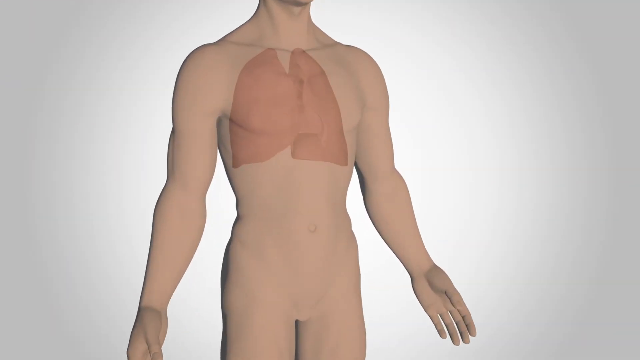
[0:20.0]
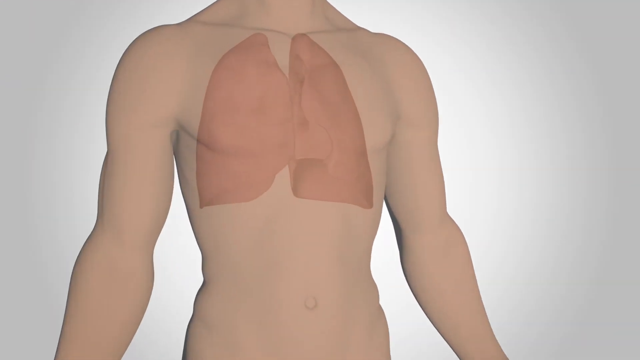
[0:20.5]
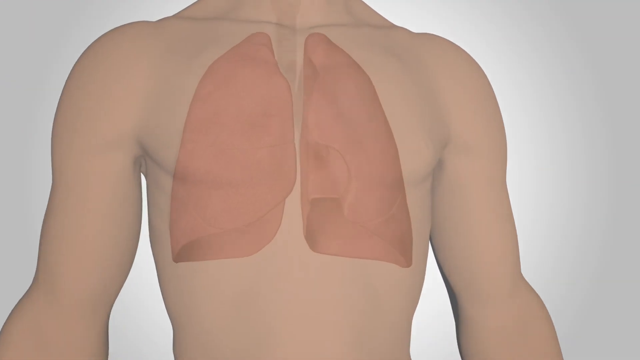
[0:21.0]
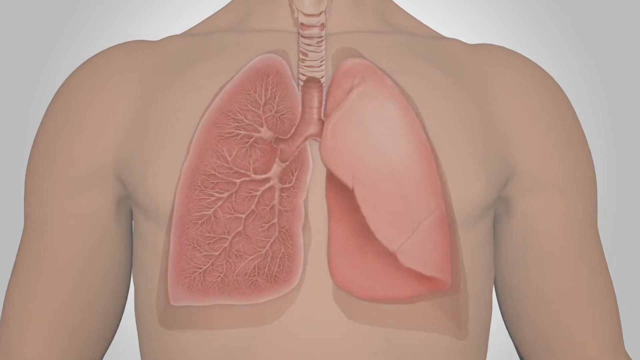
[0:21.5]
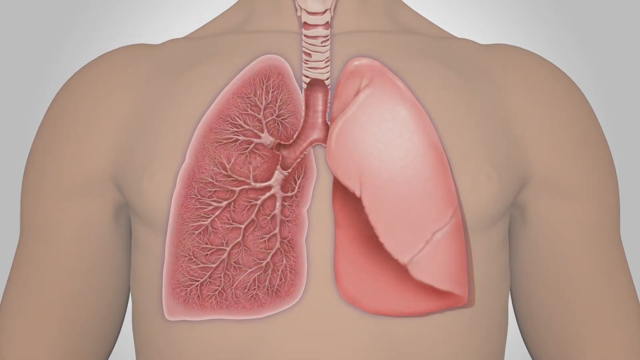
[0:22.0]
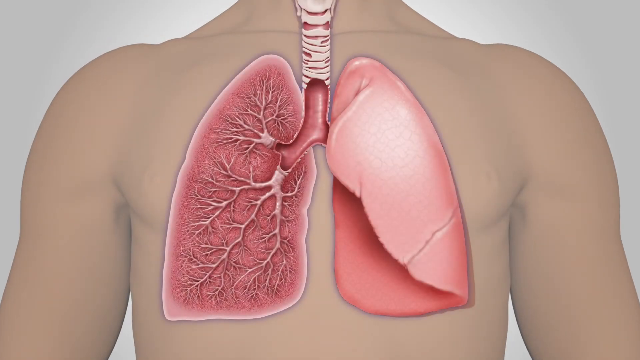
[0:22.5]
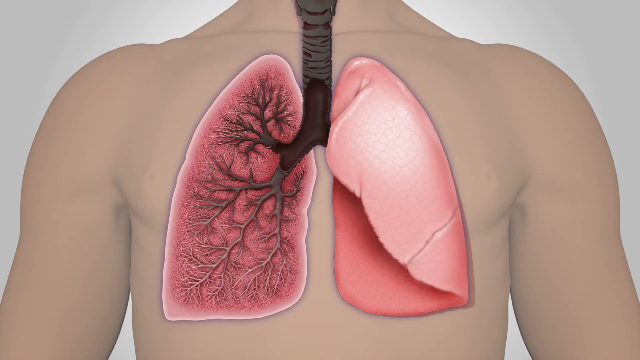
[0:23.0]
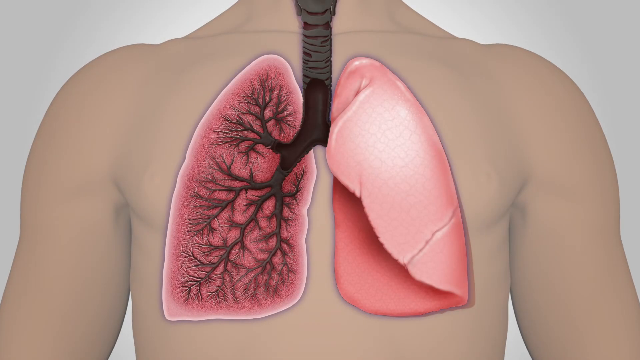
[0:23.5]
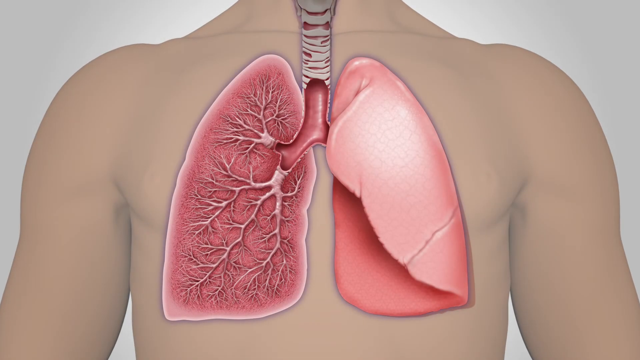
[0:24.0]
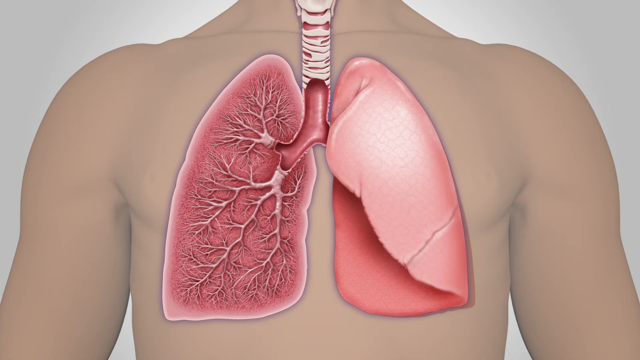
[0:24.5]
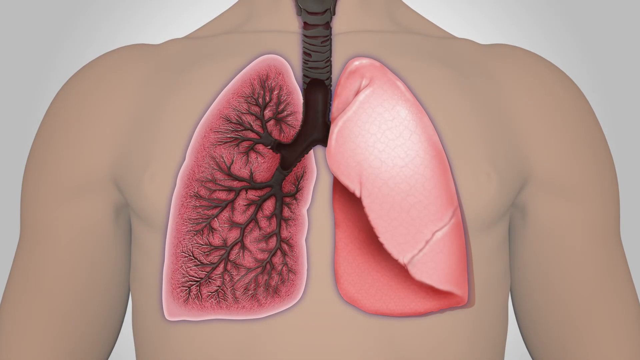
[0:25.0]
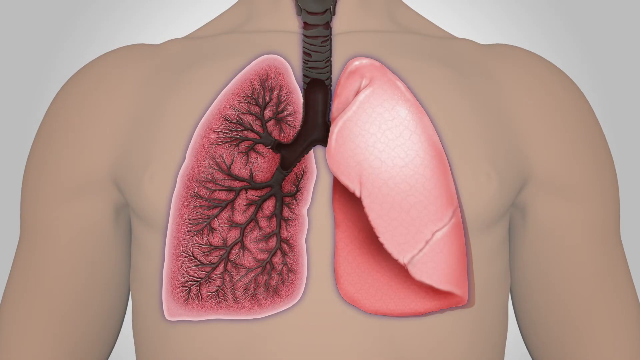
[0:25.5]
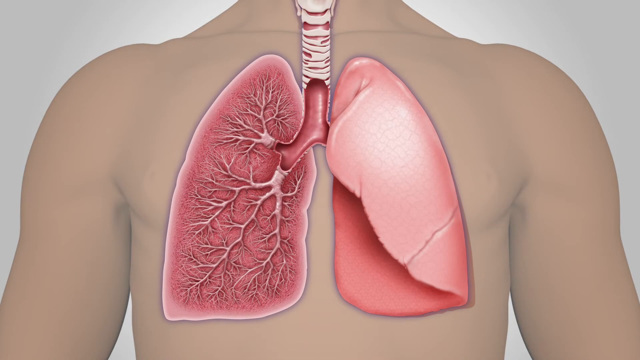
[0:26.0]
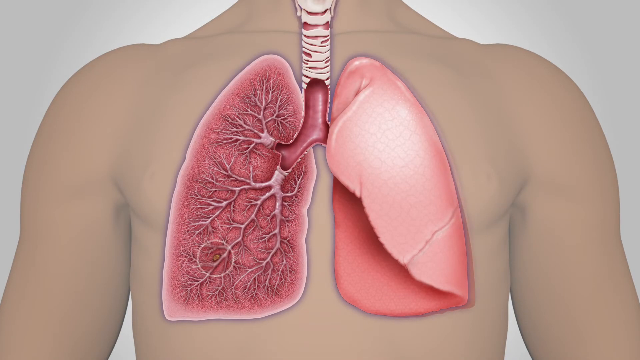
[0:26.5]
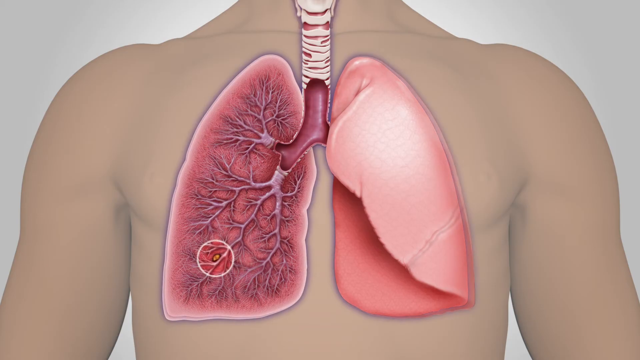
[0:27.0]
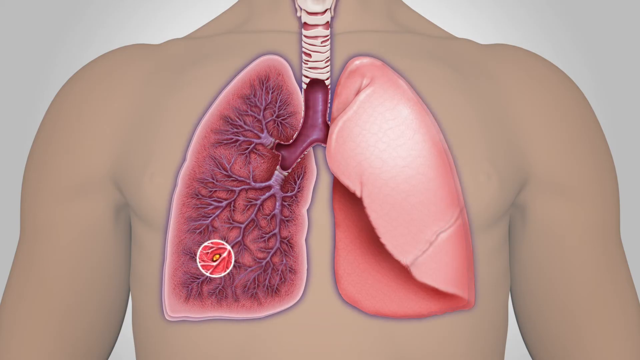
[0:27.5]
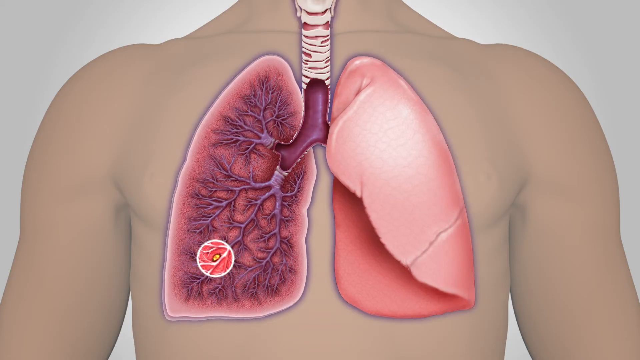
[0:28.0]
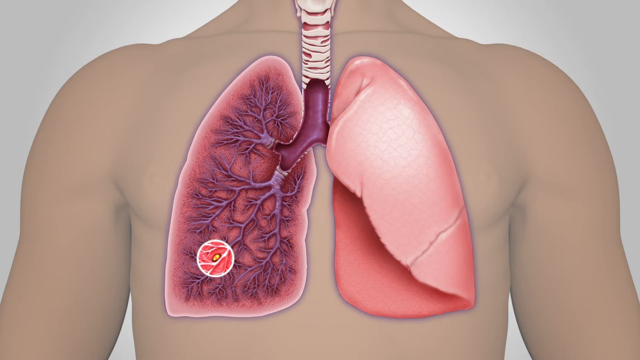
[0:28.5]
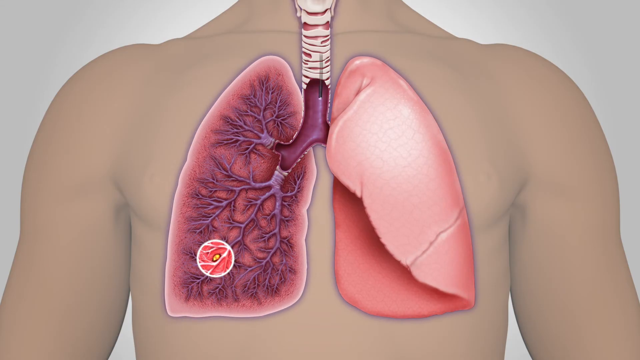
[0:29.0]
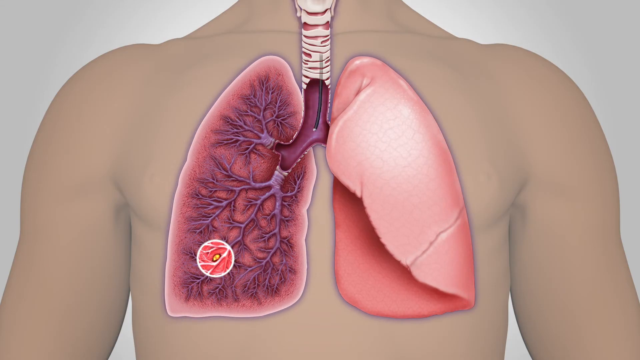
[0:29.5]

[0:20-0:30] The same human form is shown with its arms outstretched; the head is not visible. The body and arms are brown and tan, and the lungs are highlighted in pink. As the camera pans and the body turns more fully toward it, the lungs become more detailed and darker pink, and the esophagus appears in dark brown. The lung on the left-hand side is shown in cross-section, attached to the esophagus, with several tendrils coming out from it. A small circle then highlights, in deeper pink, a small oval on one of those tendrils. A device begins snaking down from the esophagus and reaching into the cross-sectioned lung on the left, while the lung on the right is shown closed.